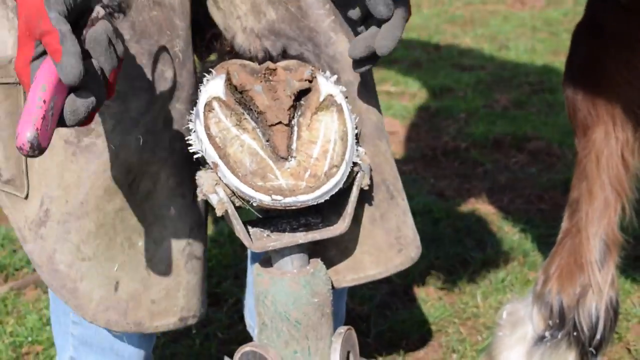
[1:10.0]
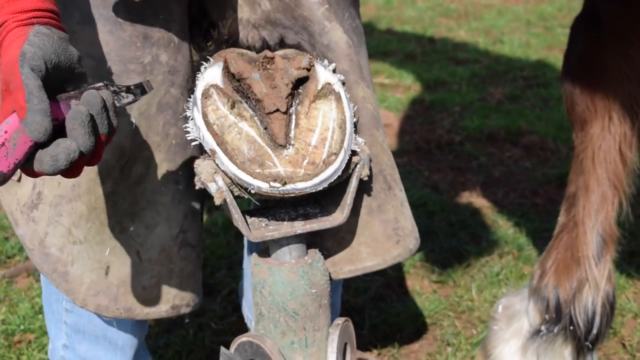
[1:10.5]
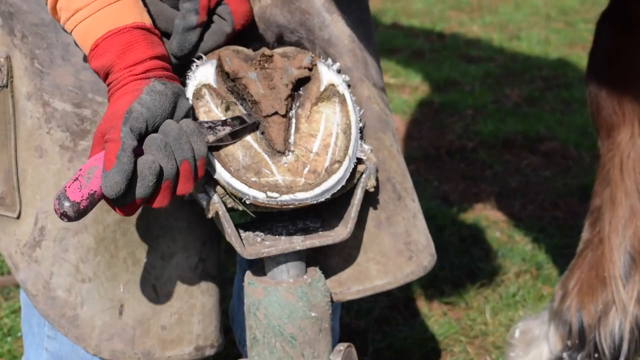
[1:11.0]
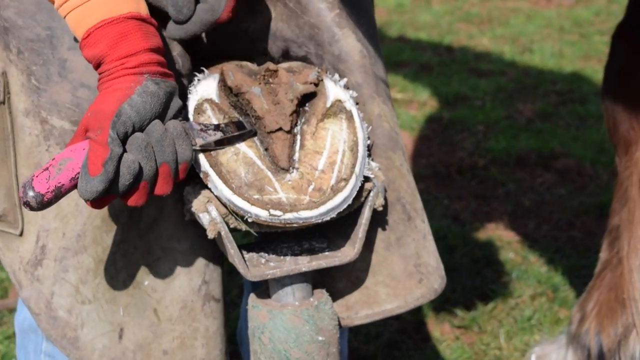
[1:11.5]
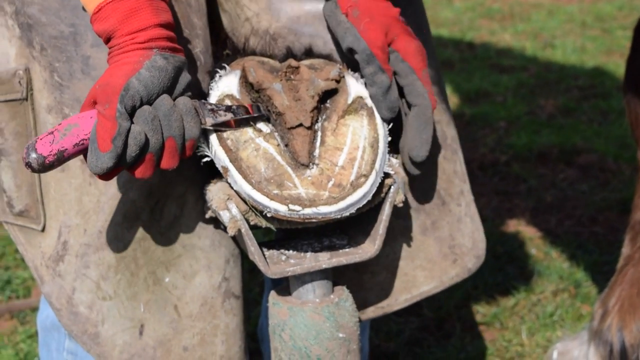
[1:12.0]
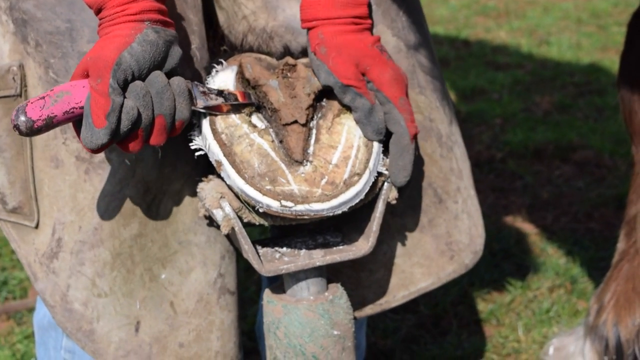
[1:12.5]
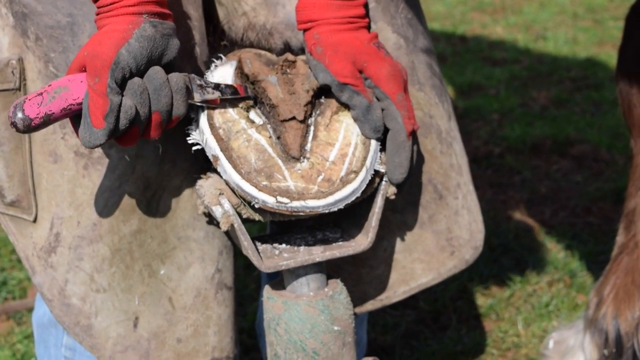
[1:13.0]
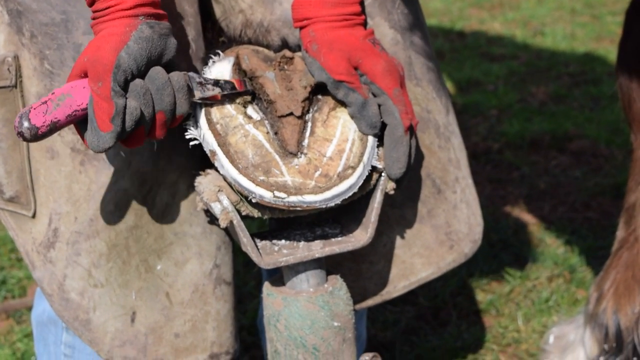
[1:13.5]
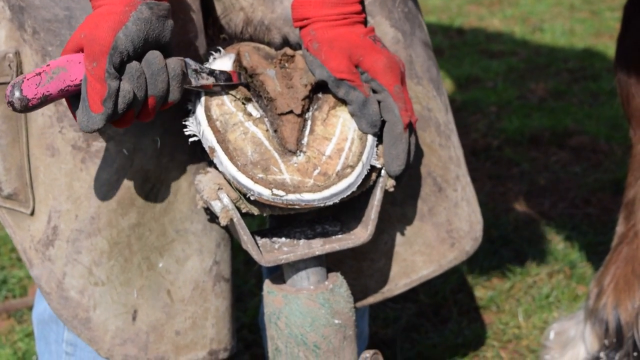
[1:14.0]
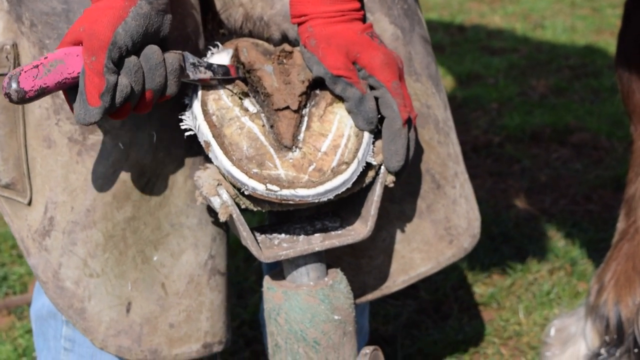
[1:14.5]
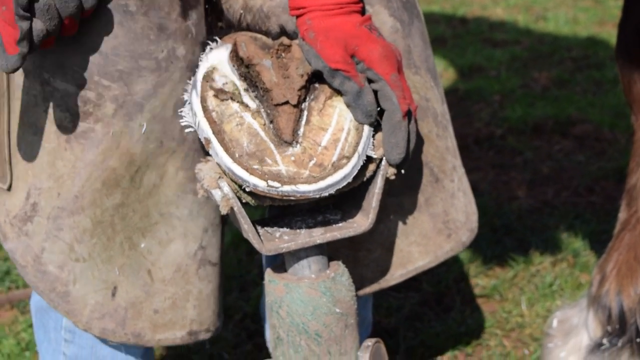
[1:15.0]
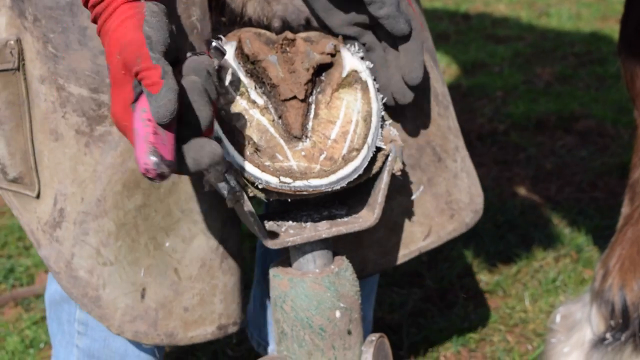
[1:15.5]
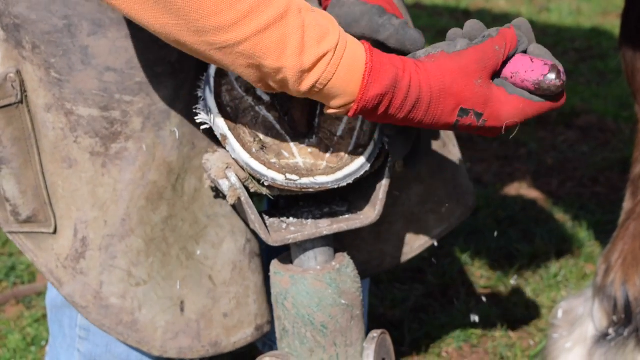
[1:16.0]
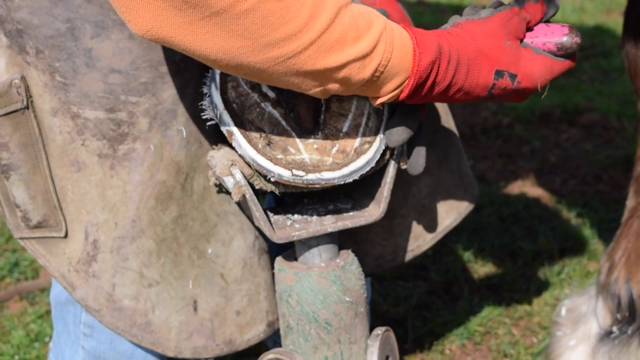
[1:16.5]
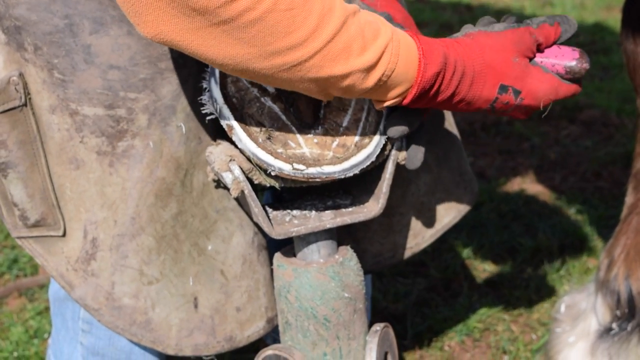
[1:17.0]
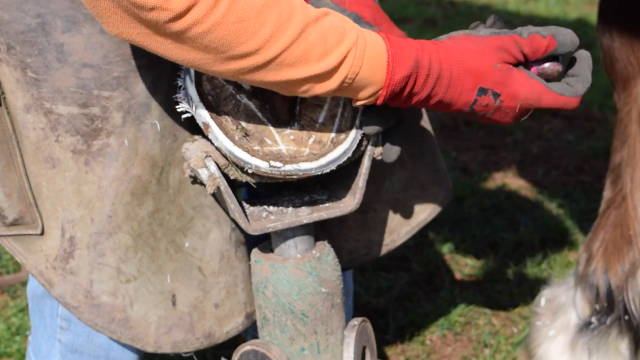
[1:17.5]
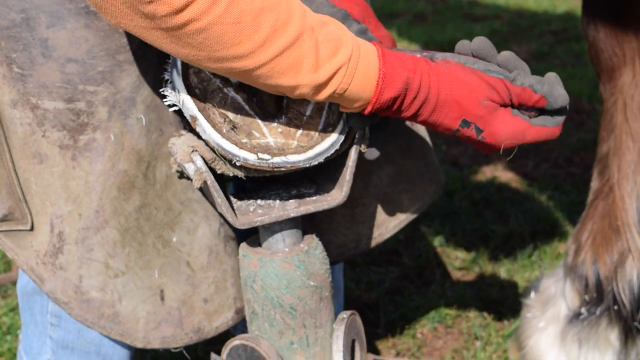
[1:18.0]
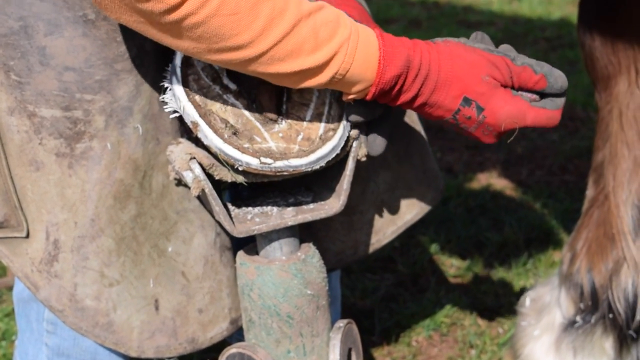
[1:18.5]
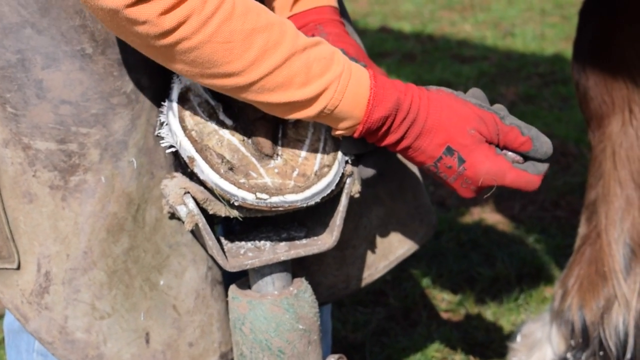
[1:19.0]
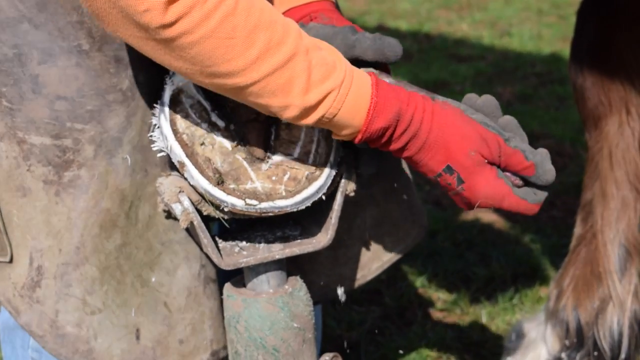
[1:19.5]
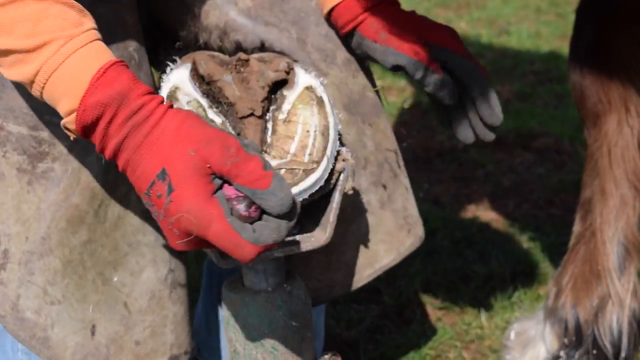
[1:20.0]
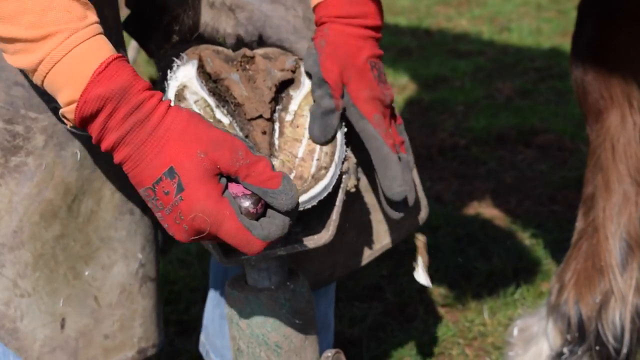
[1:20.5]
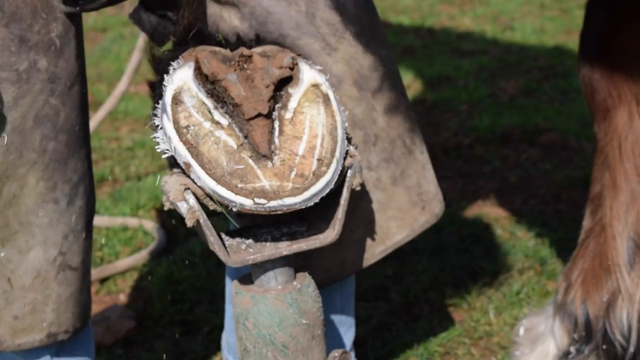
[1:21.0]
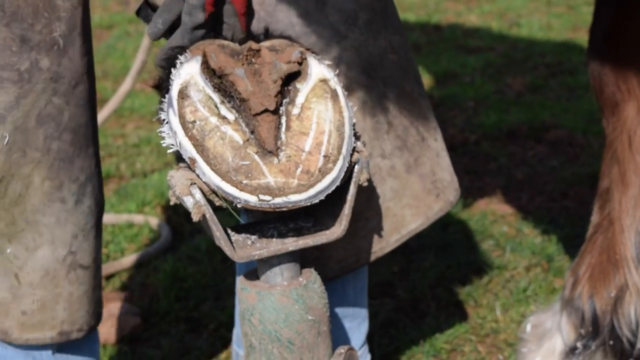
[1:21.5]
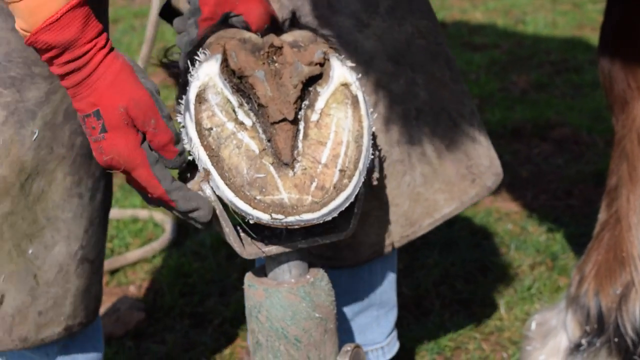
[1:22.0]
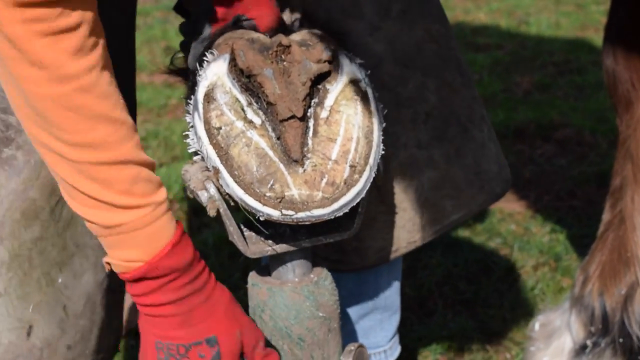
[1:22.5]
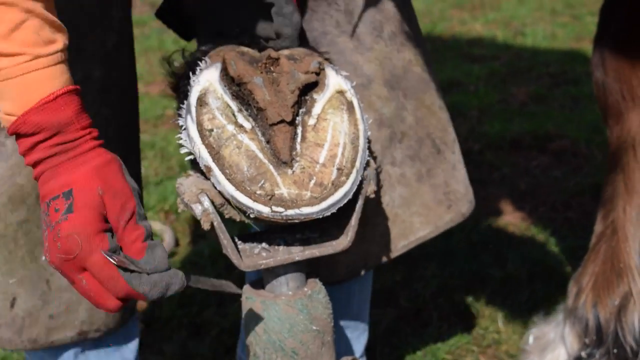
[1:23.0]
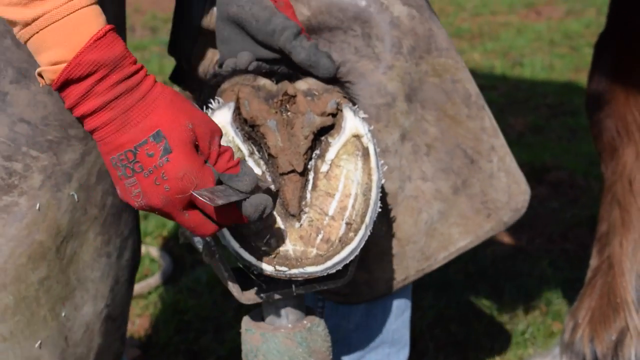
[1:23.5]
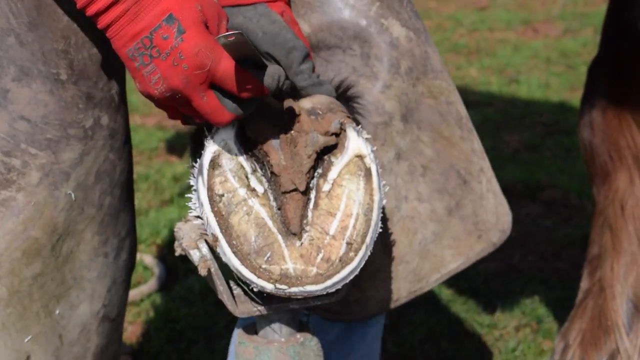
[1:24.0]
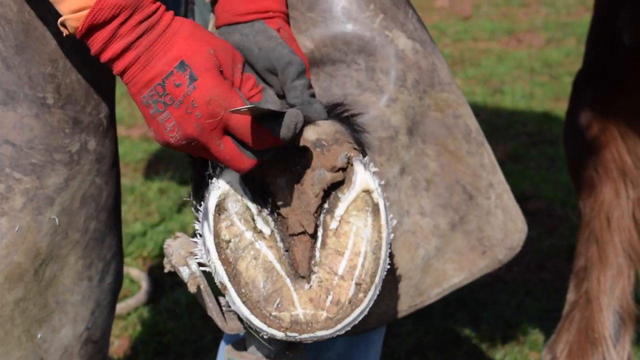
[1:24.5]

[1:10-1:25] She moves on to another tool, the pink-handled tool from her smock, which has a shiny metal tip, and shaves around the brown triangle spot in the middle of the horse's hoof. She shaves multiple parts around it, then does a little shave on one side and gets a piece off, does a little shave on the other side and gets a piece off, and wipes it away with her hands. She then grabs another smaller metal tool that looks maybe like a smaller version of the file. As she grabs it, she adjusts the hoof better into the metal holder. The hoof is still between her legs as she holds it stable and still. She takes that other file and starts going toward the brown triangle area of the hoof.